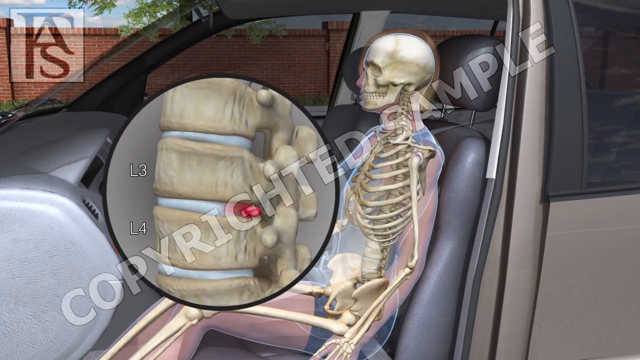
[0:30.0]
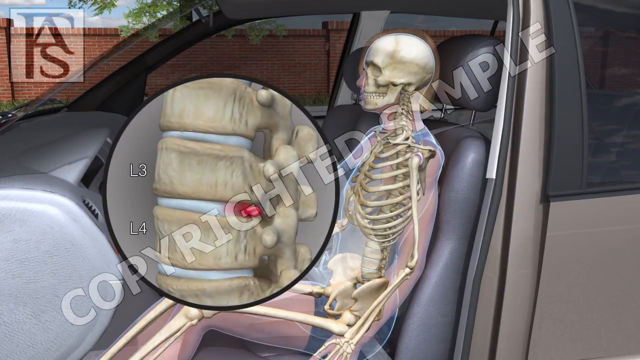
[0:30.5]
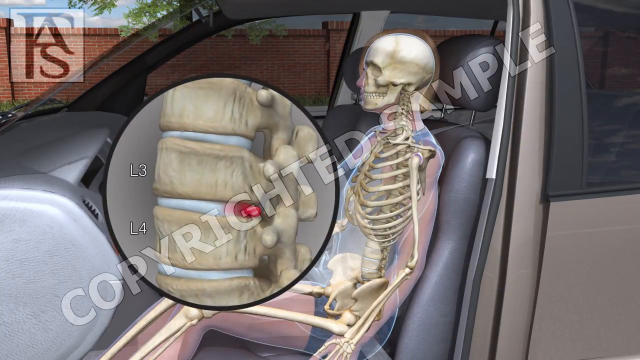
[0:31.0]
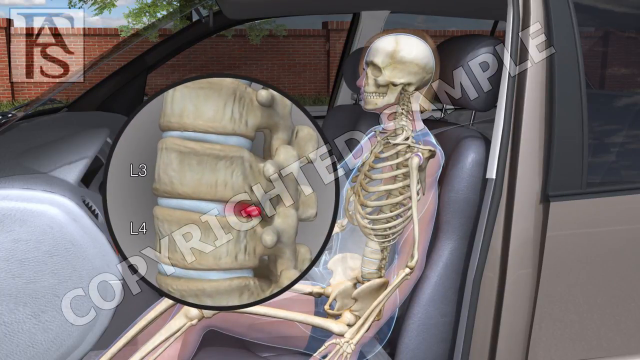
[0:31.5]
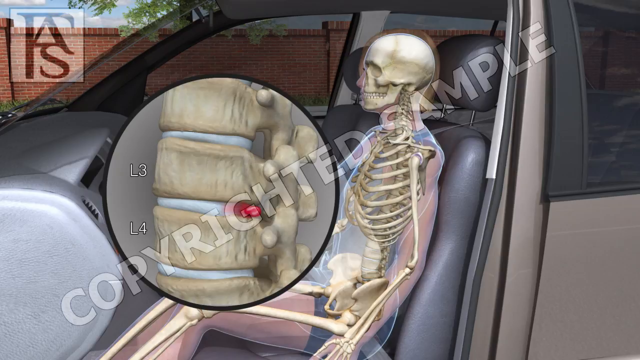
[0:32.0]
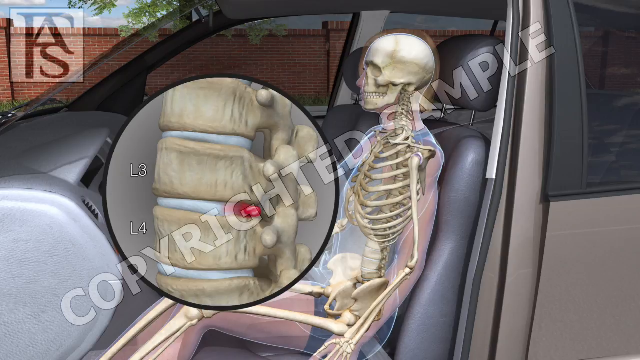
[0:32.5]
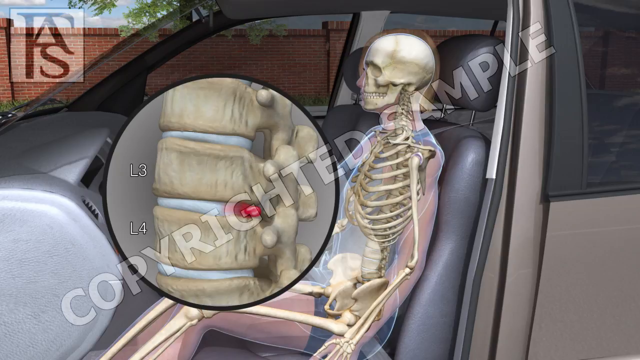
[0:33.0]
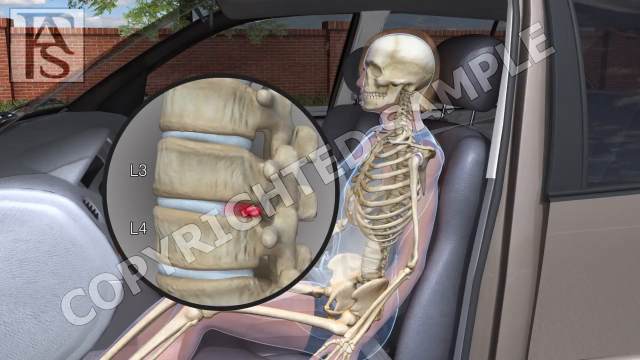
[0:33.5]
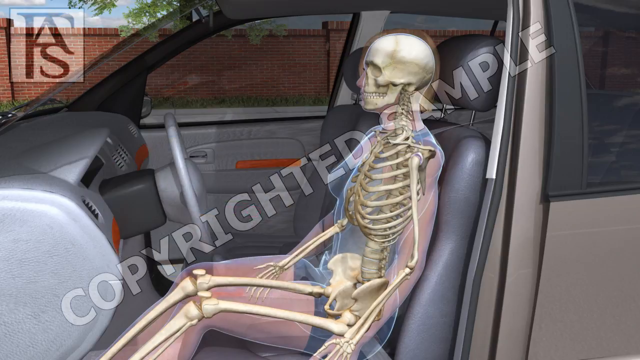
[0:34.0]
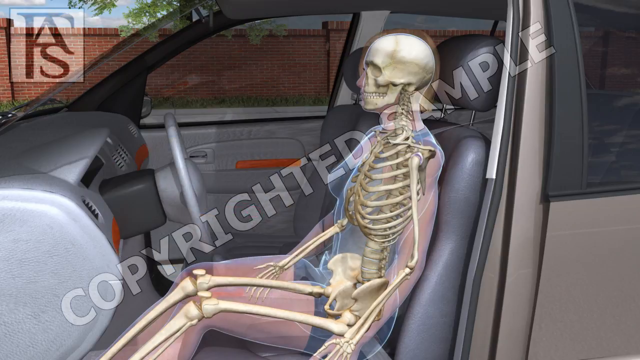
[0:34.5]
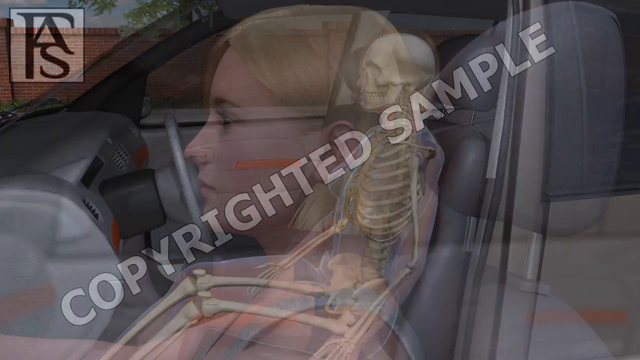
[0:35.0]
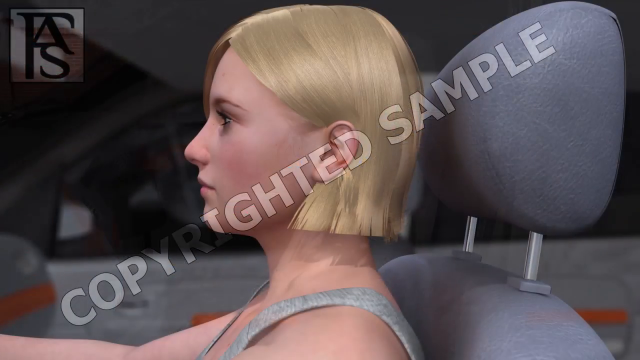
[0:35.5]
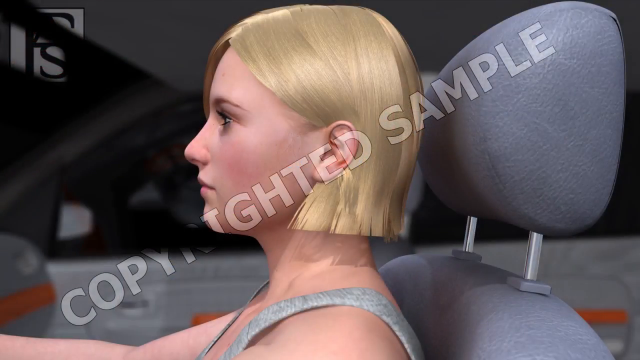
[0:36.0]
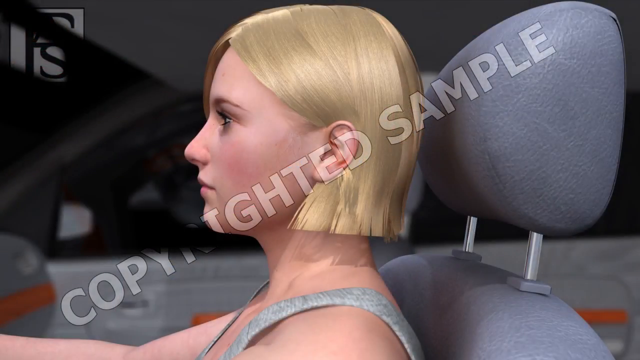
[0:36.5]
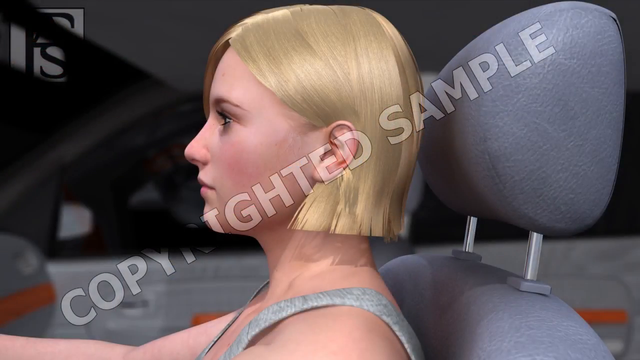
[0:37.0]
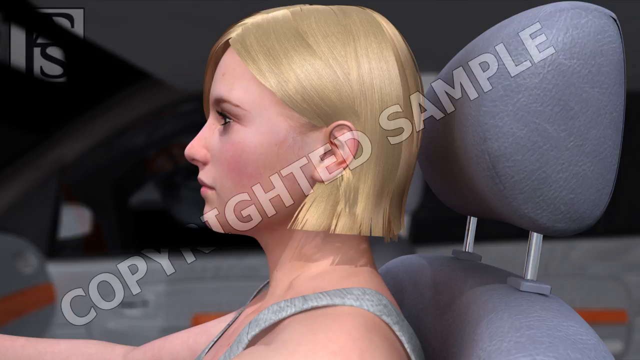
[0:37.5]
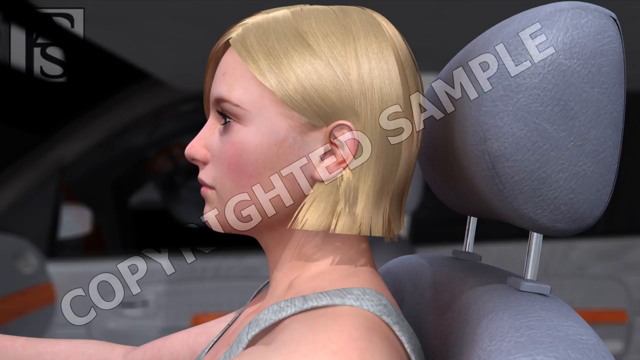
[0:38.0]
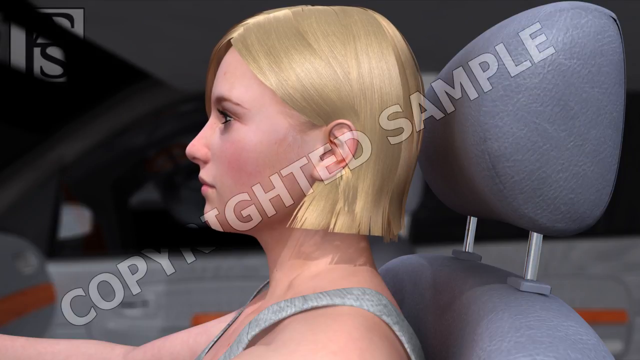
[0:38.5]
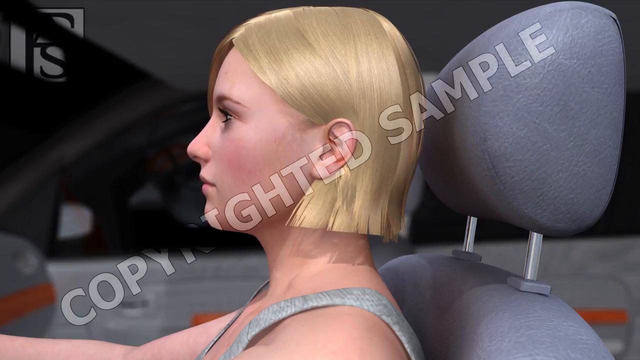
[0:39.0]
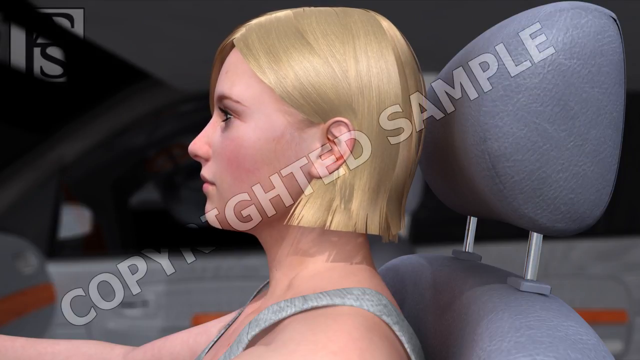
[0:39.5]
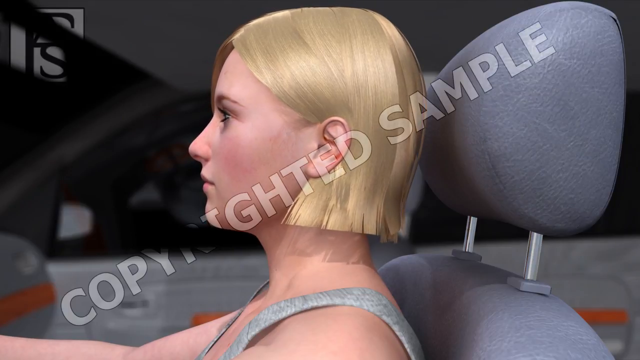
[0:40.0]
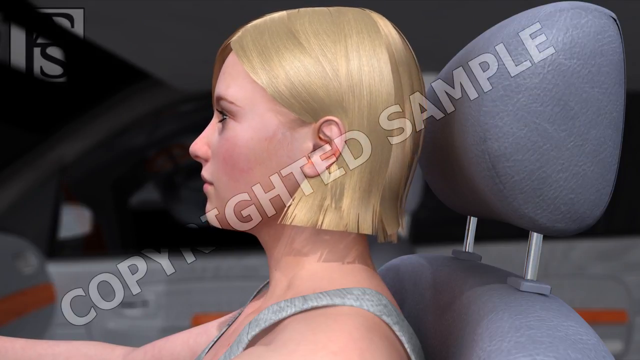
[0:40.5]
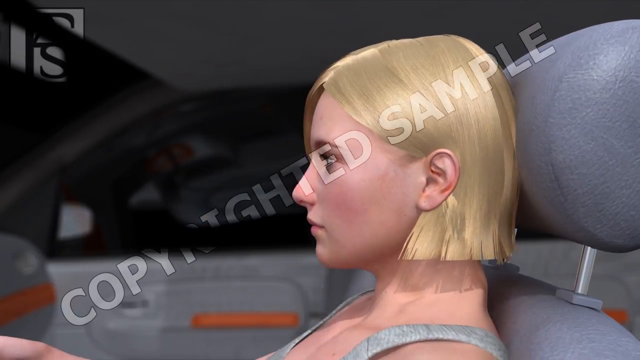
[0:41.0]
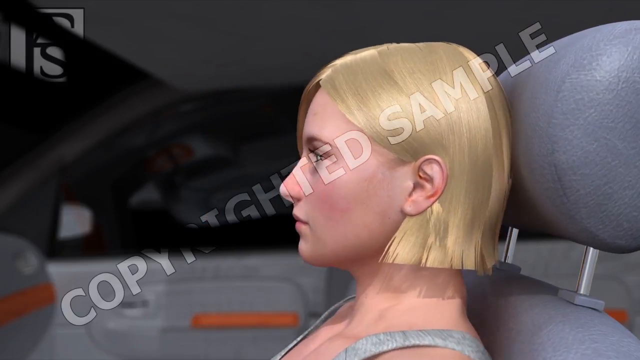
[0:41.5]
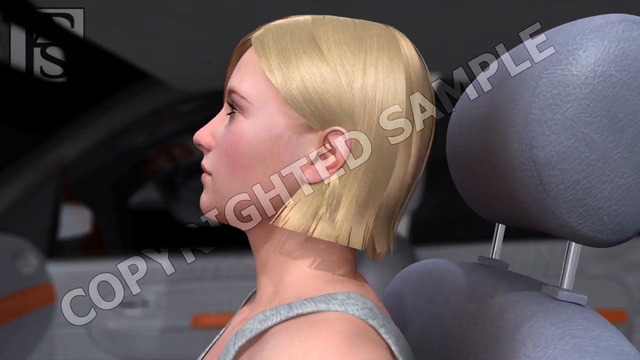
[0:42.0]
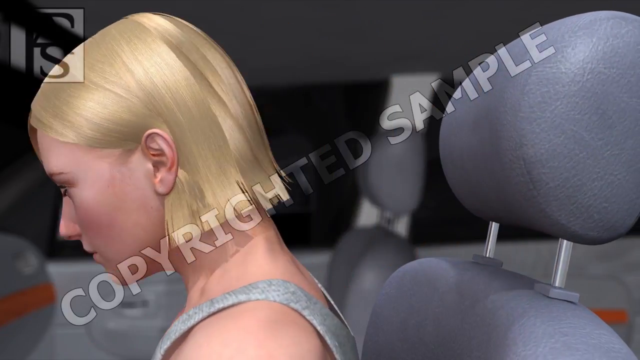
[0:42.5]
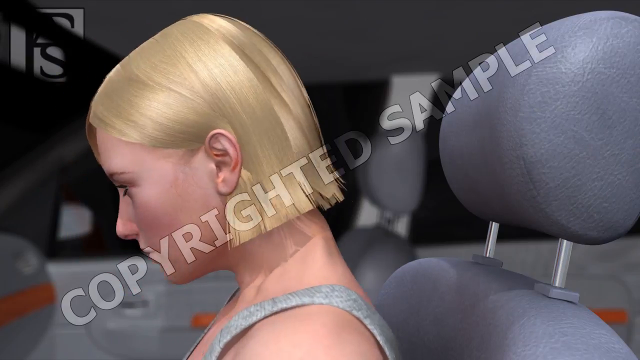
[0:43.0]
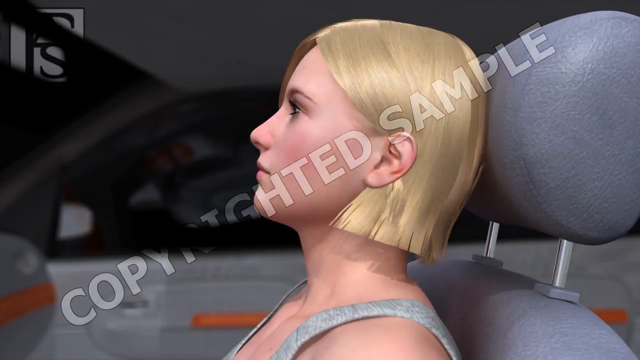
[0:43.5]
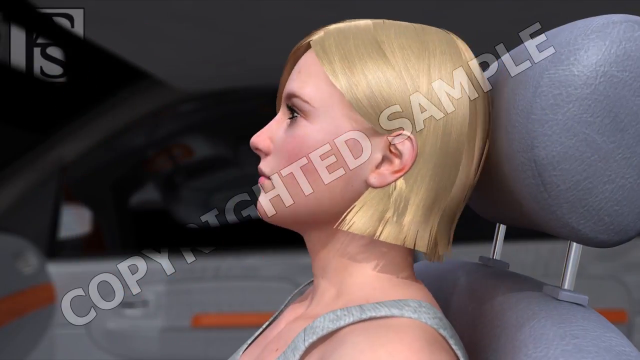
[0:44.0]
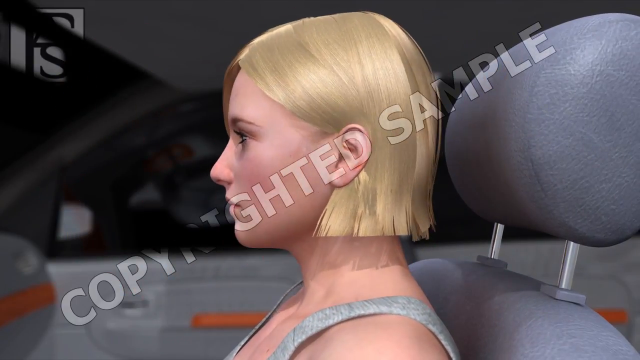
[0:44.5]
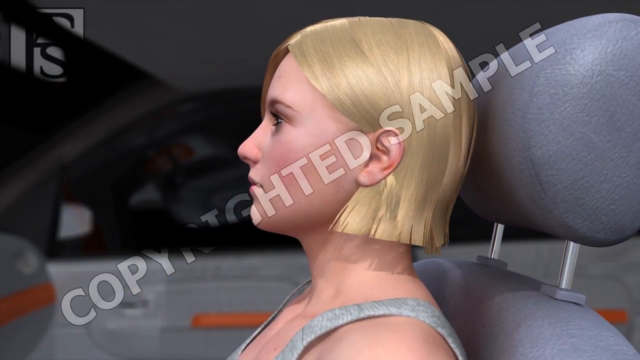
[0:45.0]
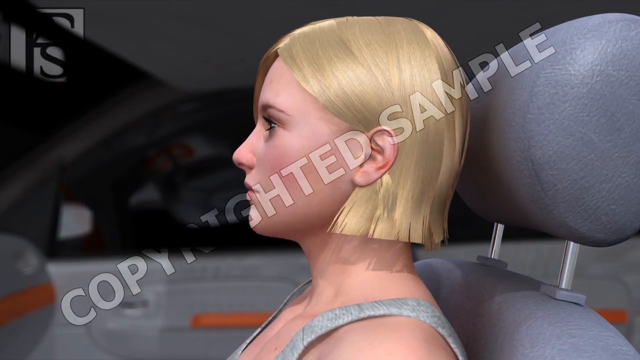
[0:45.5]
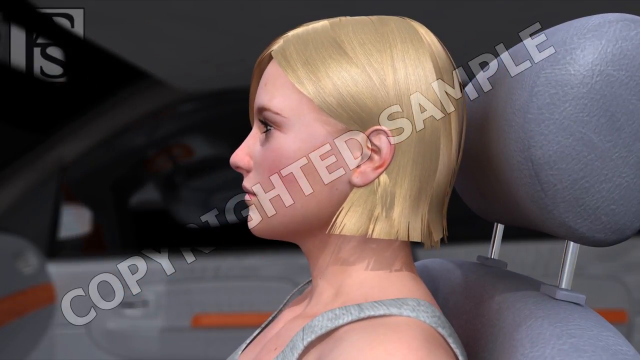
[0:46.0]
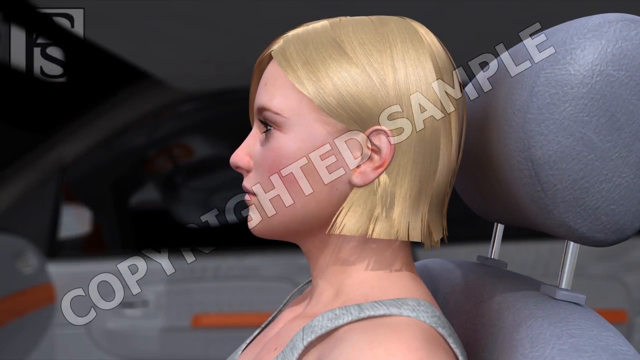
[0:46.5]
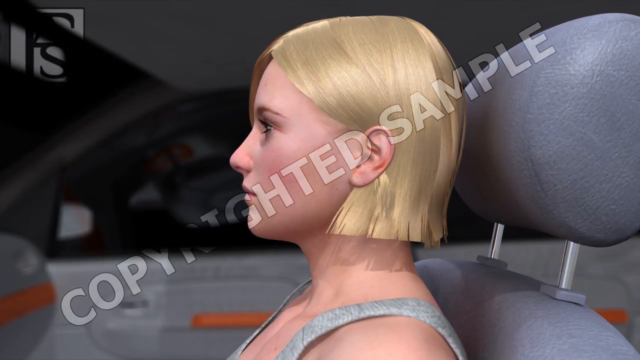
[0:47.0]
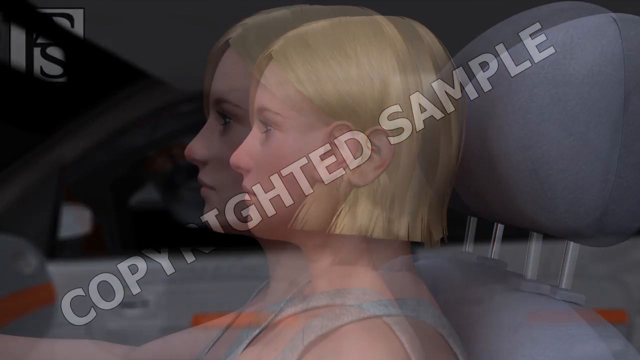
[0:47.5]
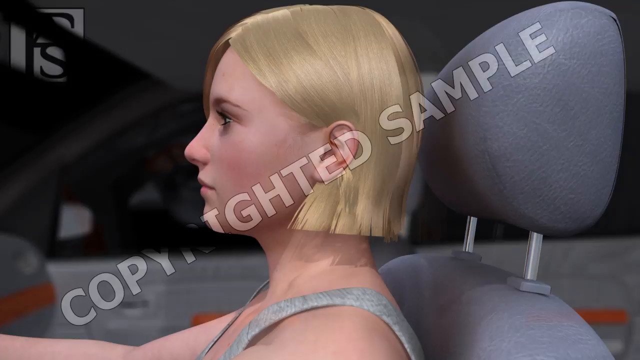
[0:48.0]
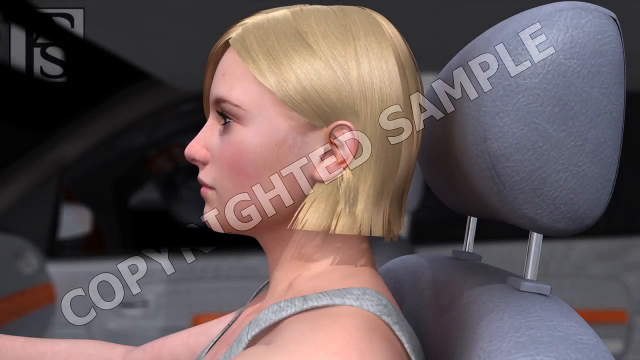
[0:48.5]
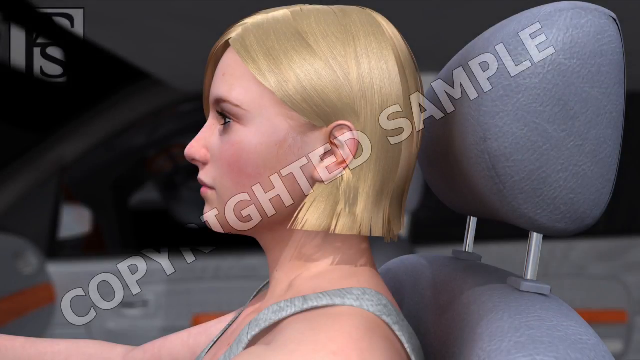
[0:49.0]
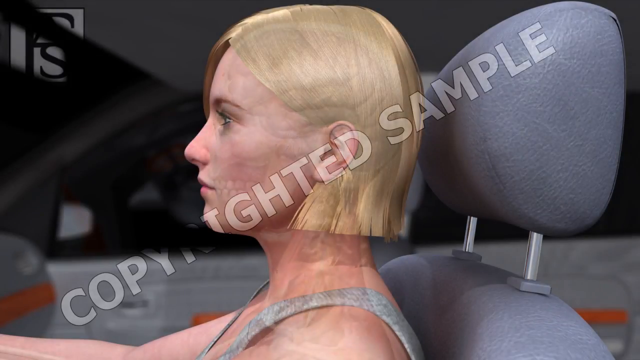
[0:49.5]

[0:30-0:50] The illustration of the low-speed impact shows the woman who was sitting still at the stop sign and was rear-ended, sitting inside her vehicle with her seat belt on. Her head moves forward and then back, and then the illustration briefly shows the brain. It depicts the impact on the head, the neck and the brain, showing different pressure points and the different types of damage a low-speed rear-end collision can cause.